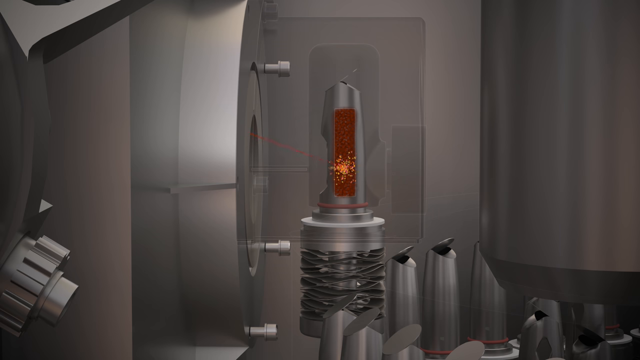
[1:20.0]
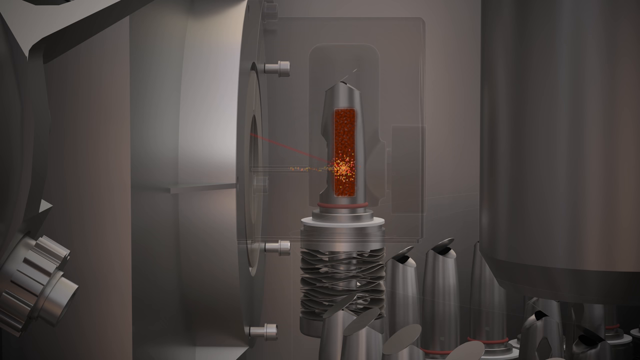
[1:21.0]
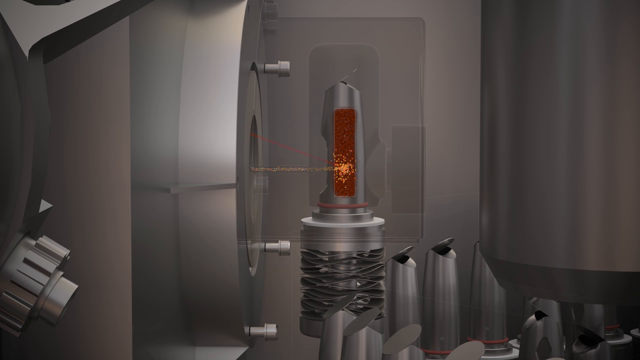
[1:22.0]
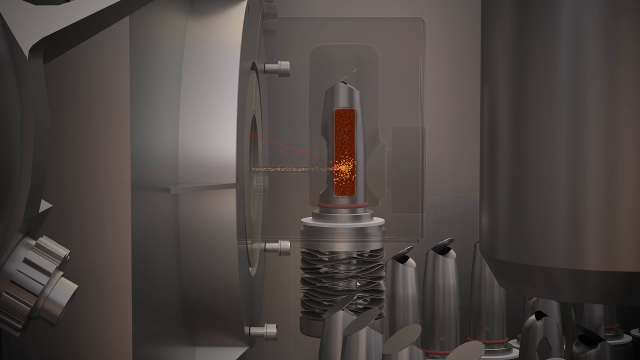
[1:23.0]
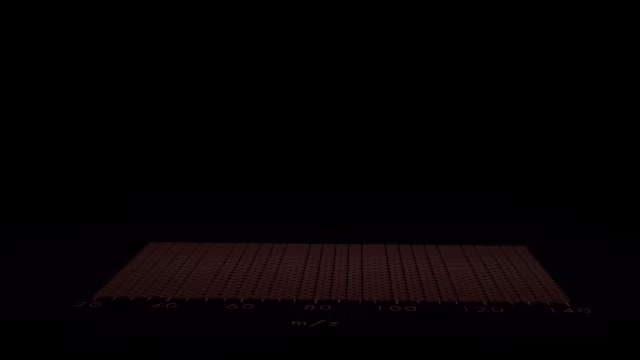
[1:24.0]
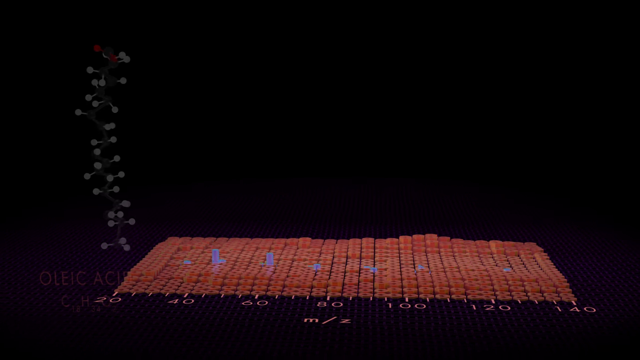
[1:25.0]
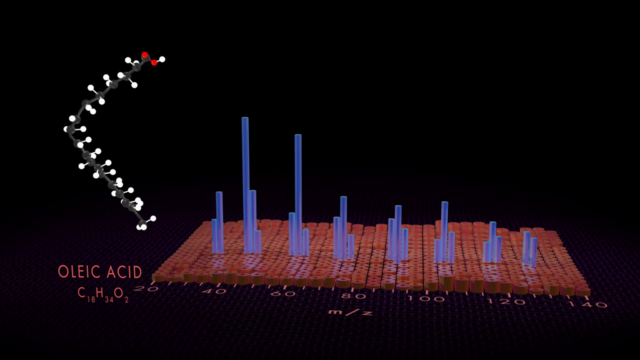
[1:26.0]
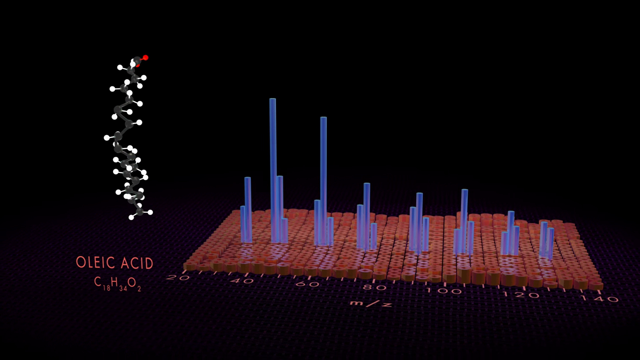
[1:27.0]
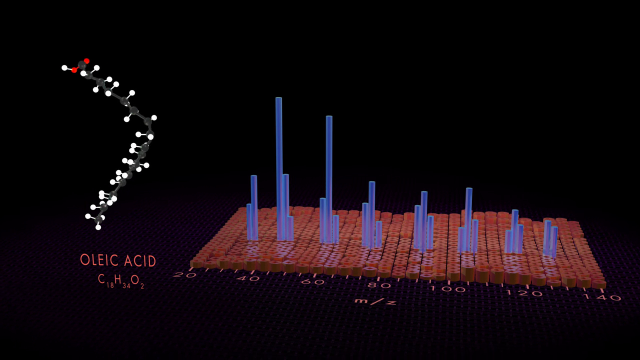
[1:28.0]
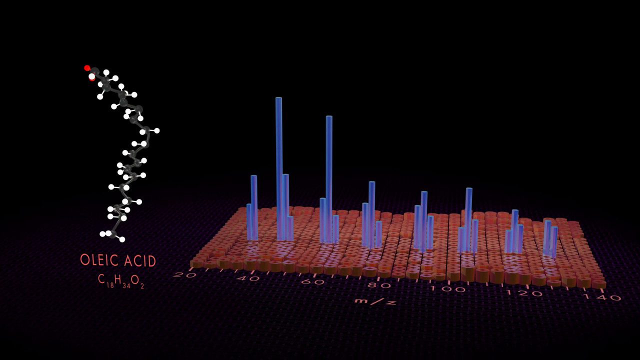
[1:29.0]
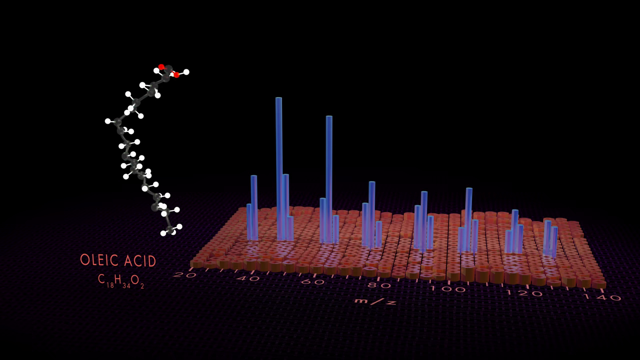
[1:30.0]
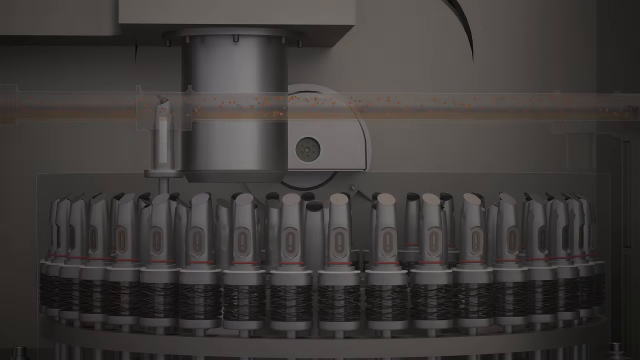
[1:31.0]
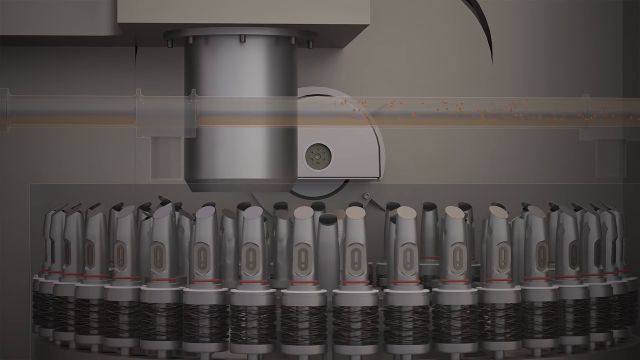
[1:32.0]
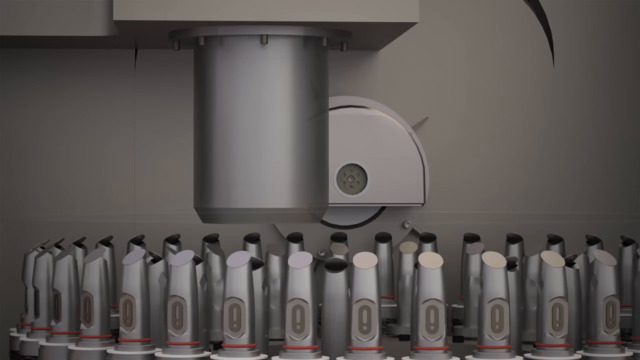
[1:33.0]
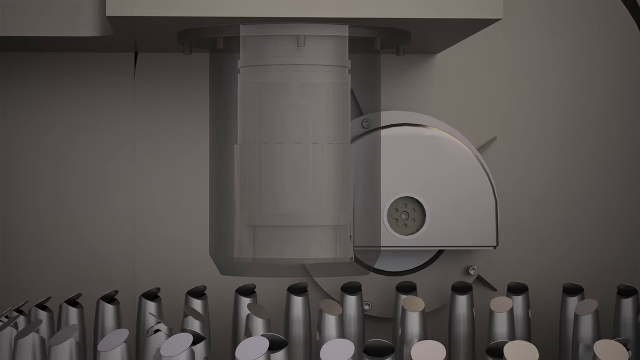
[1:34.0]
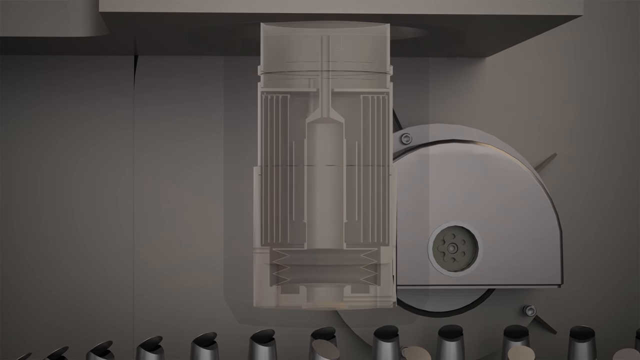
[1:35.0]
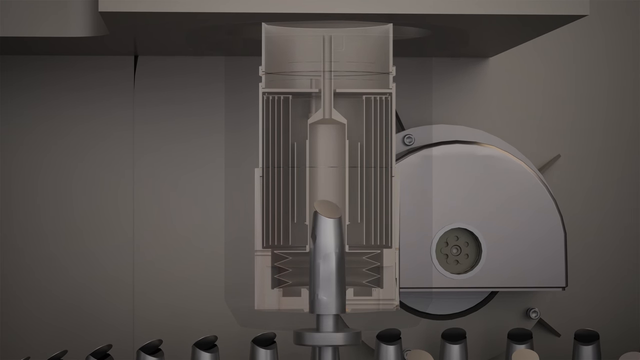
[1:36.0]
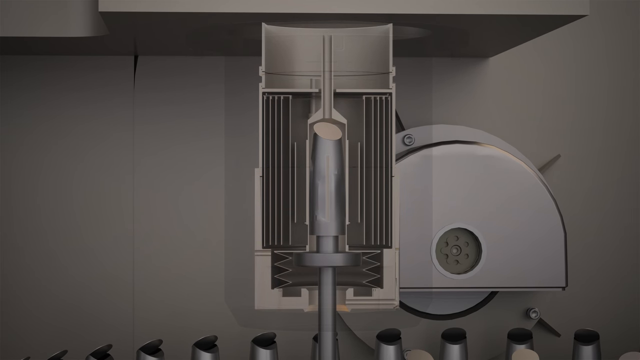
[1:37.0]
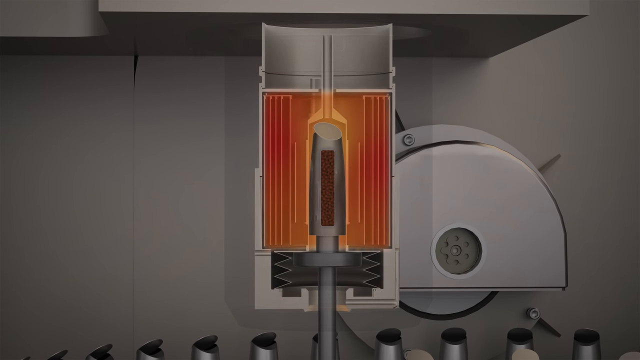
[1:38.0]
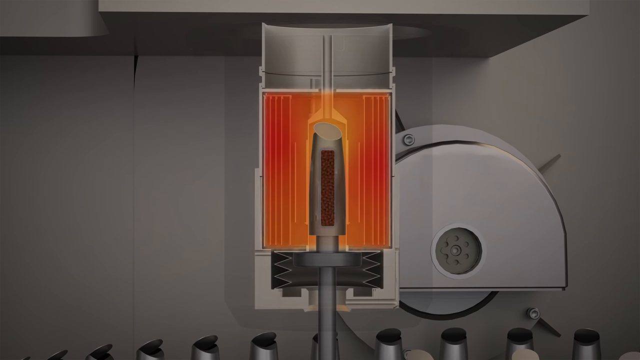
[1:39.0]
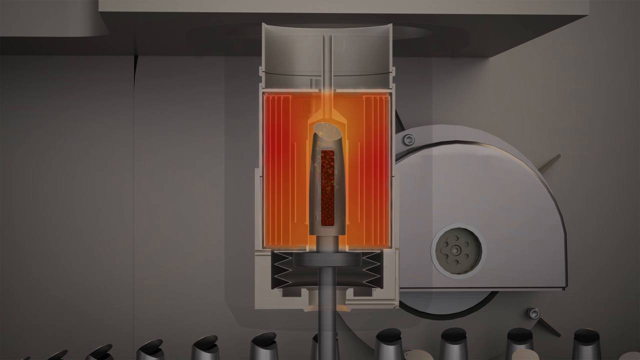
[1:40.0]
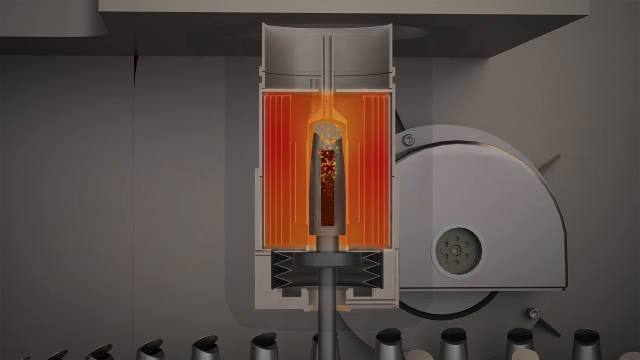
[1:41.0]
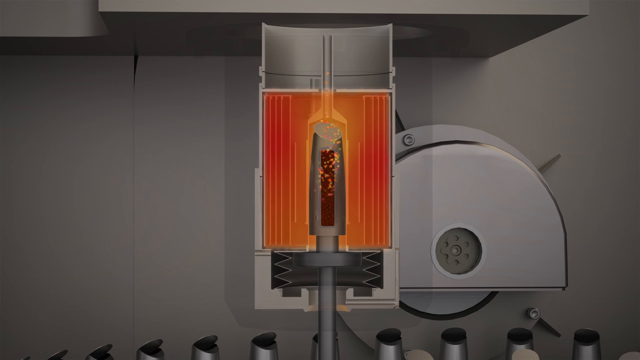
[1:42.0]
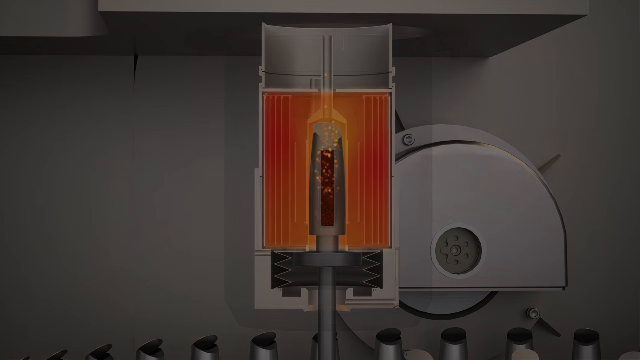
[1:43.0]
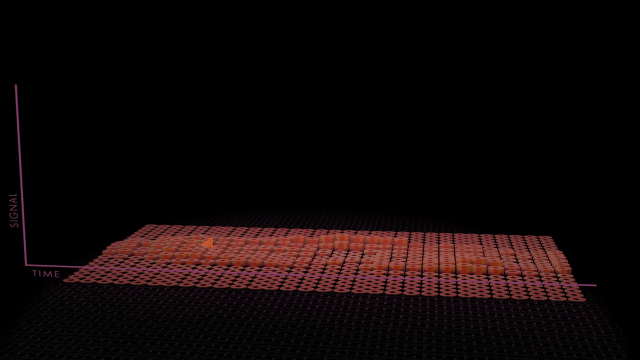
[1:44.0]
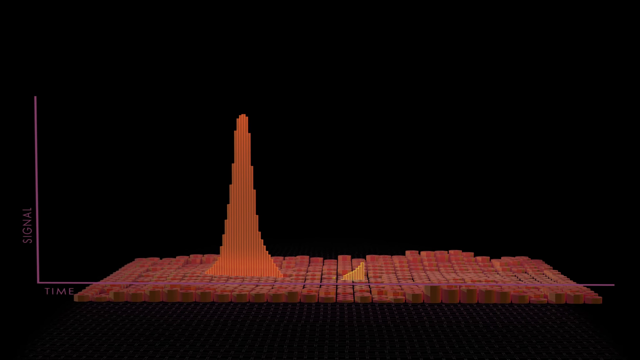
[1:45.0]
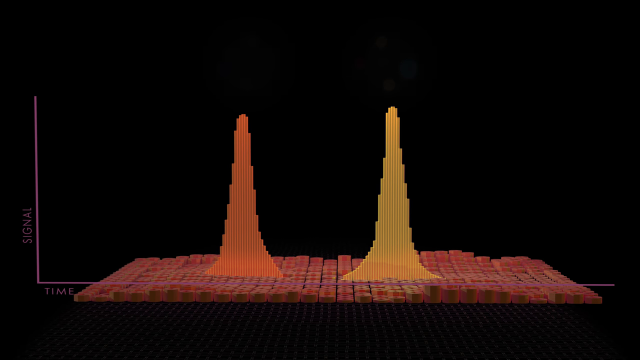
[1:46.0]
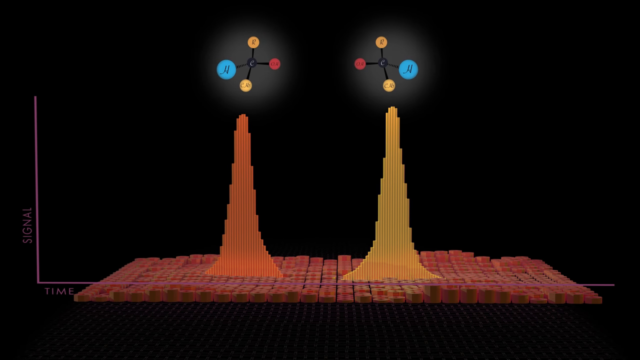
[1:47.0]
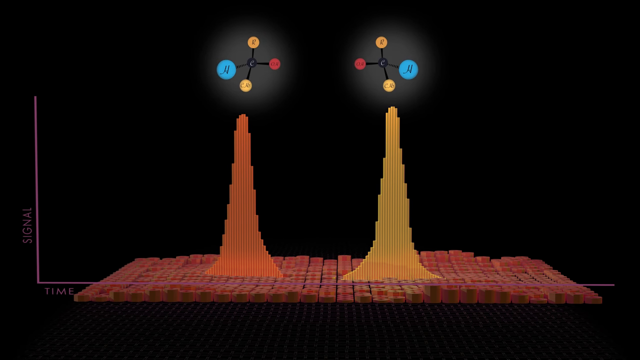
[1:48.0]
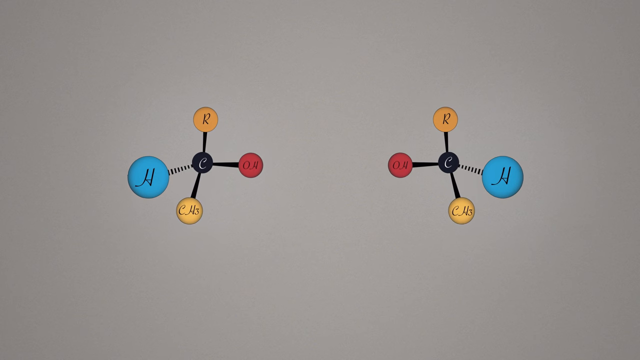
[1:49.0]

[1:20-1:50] A red laser beam continues to hit the metal object holding the brown particles, seemingly creating heat, as small orange specks come off it. The view moves to a different location: a black background with a red rectangular shape at the bottom and blue bars coming up from it. On the left is something almost like a DNA-type strand, with red text right underneath it reading "oleic acid"; there are white and red circles on the strand. The view moves back inside the metal contraption and zooms in on a specific part: a silver cylinder with a central hollow area. A metal piece goes upward into the hollow area, and everything in the hollow area turns yellow and red, seemingly showing it heating up, while orange particles also move upward. Another screen follows: a black background with a red floor, and an orange tower and a yellow tower coming out of the red floor. It still looks like a graph, but more computer-generated. Right above each of the towers, molecules seem to appear. The view zooms in and everything else disappears, leaving only the molecules, one on the left and one on the right. Each has a black center circle with four strands going out from it: a blue one with an H in it, a red one, and two orange ones.